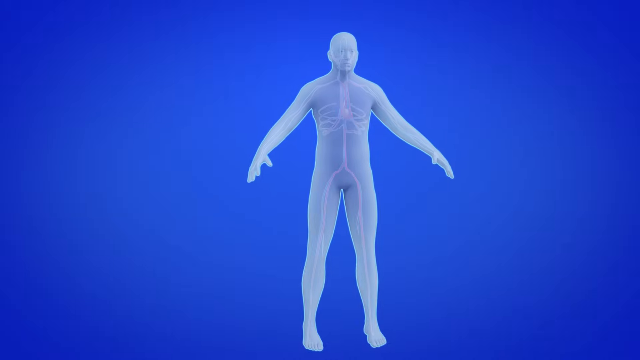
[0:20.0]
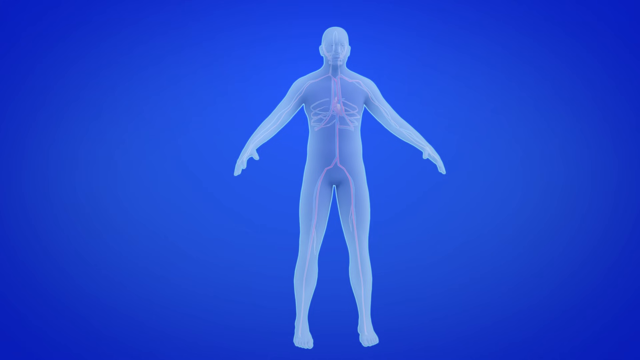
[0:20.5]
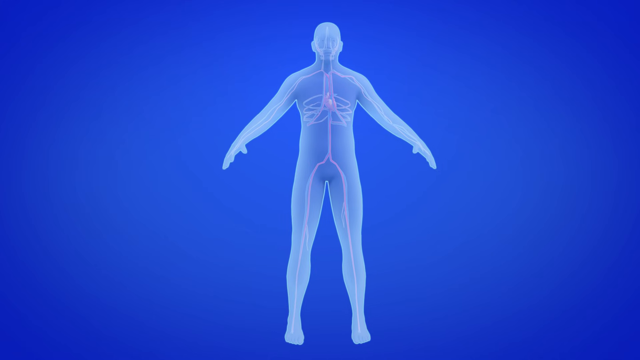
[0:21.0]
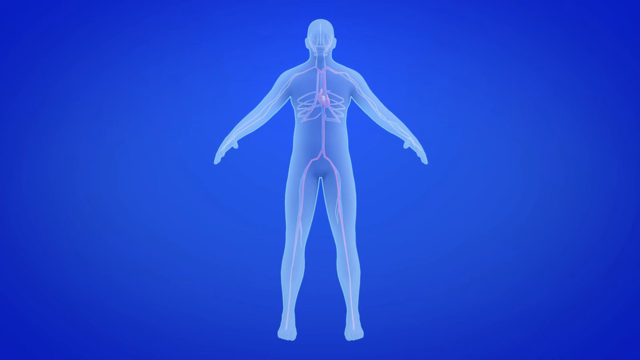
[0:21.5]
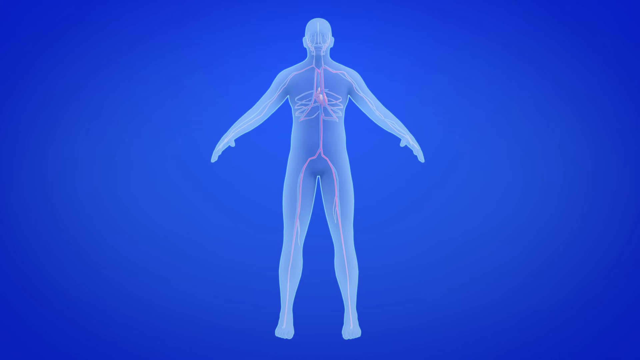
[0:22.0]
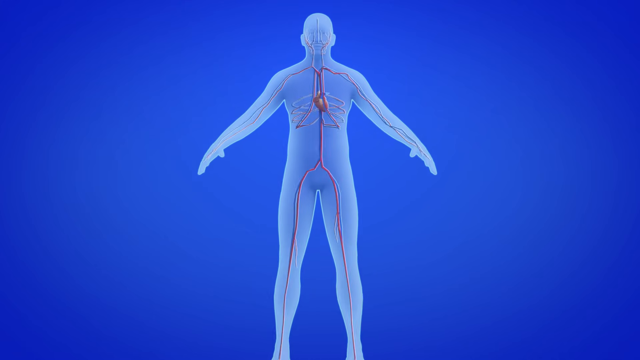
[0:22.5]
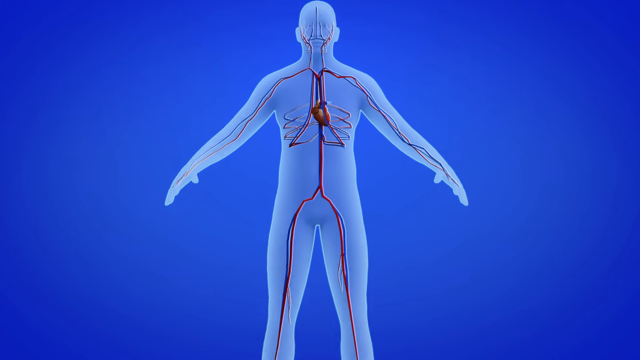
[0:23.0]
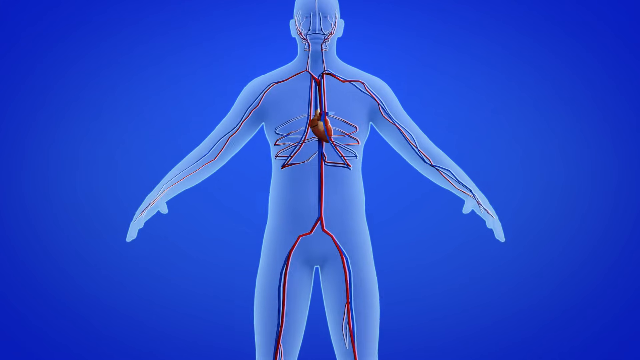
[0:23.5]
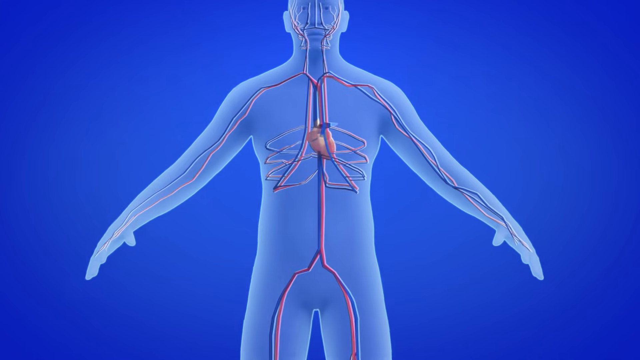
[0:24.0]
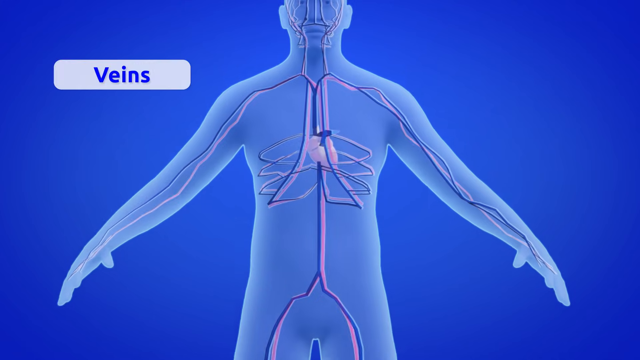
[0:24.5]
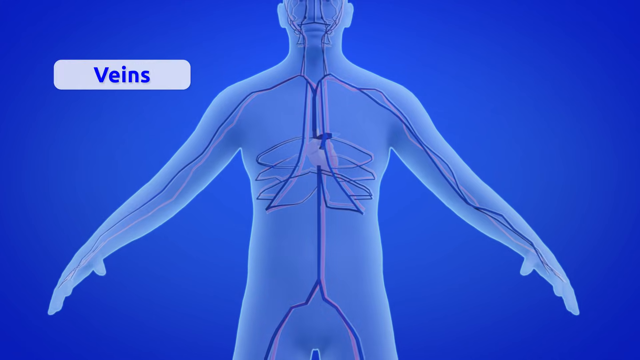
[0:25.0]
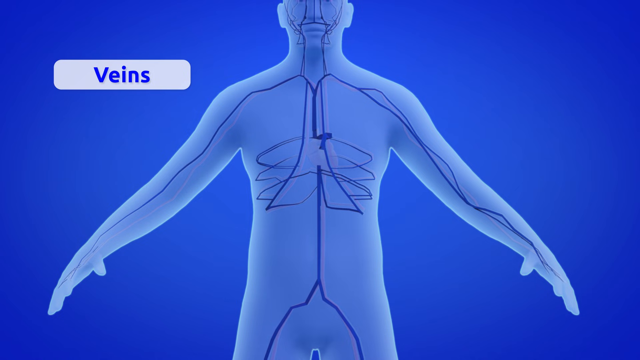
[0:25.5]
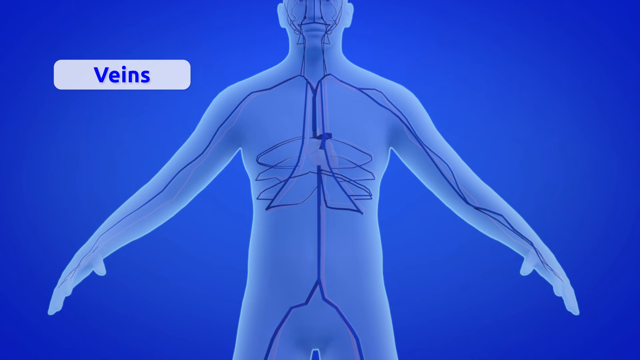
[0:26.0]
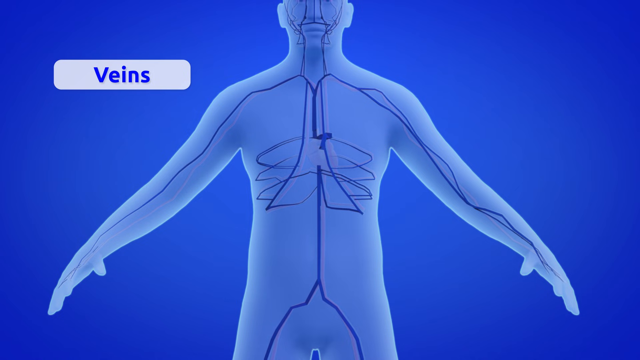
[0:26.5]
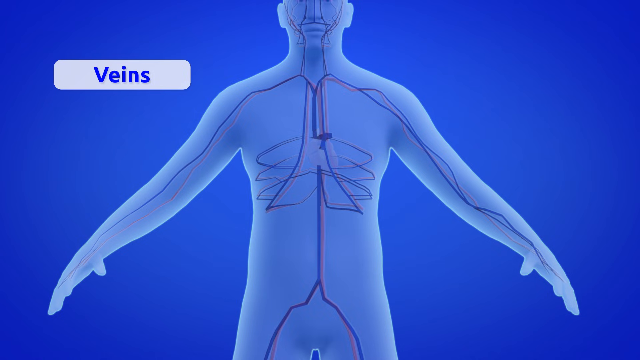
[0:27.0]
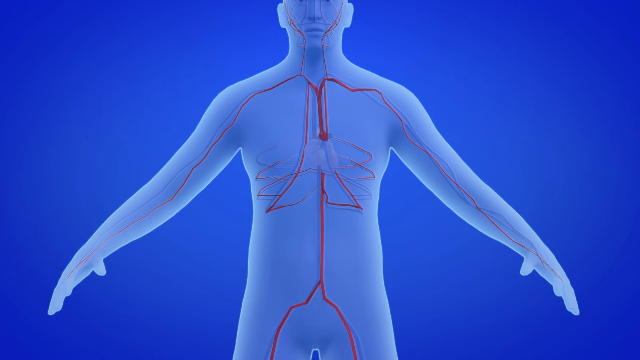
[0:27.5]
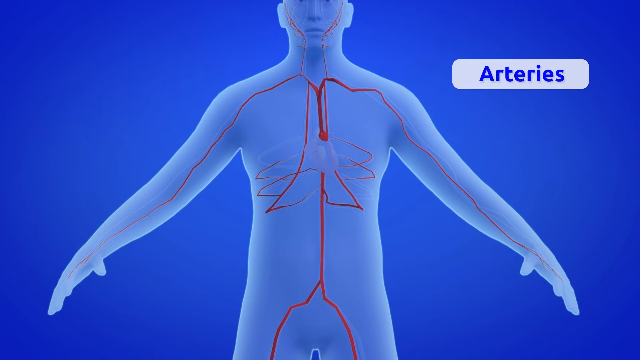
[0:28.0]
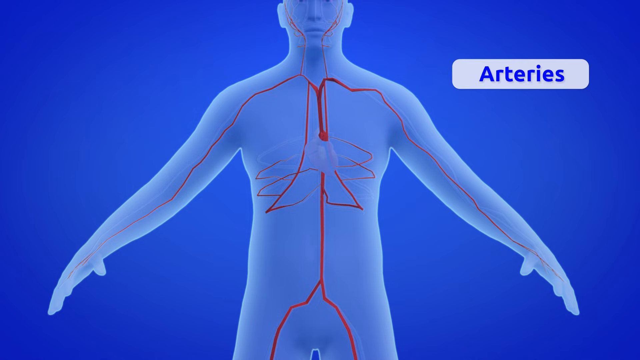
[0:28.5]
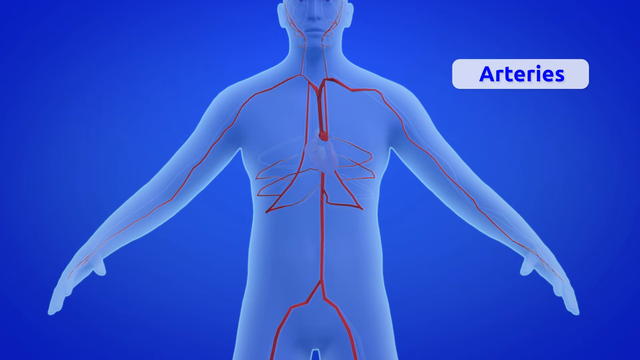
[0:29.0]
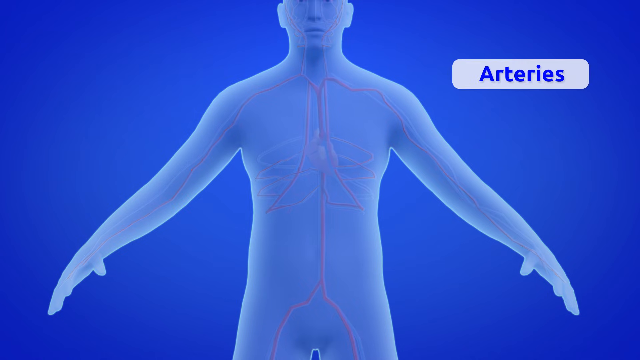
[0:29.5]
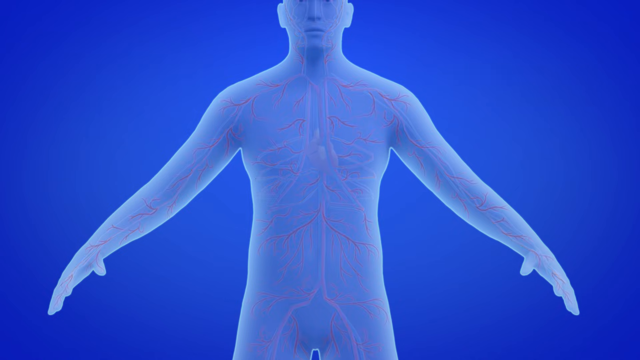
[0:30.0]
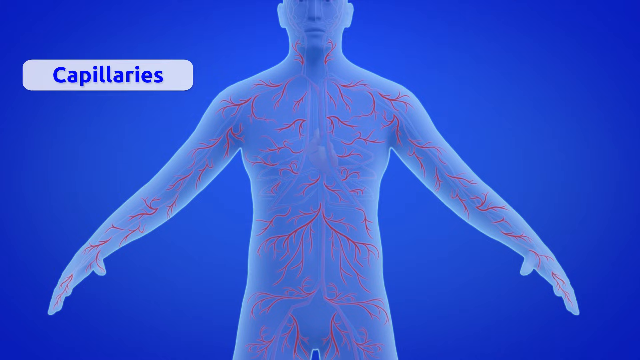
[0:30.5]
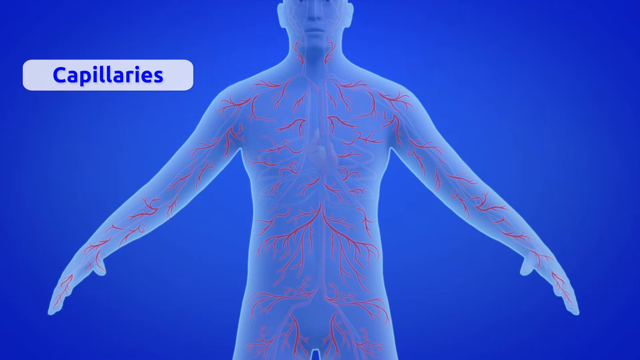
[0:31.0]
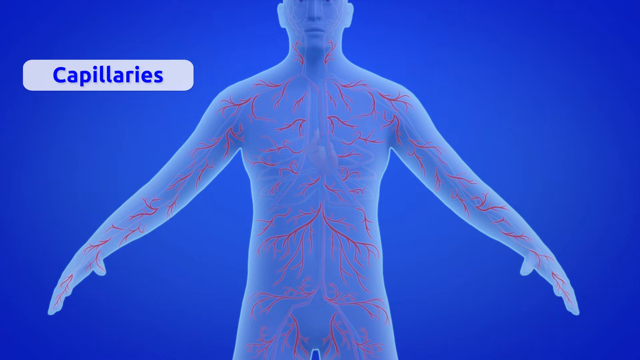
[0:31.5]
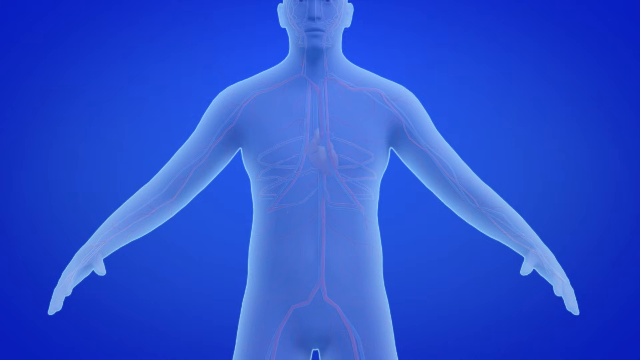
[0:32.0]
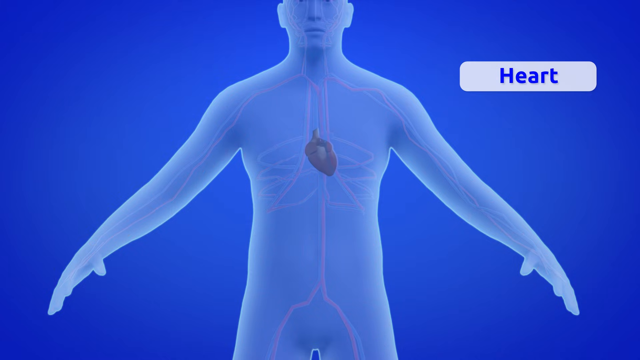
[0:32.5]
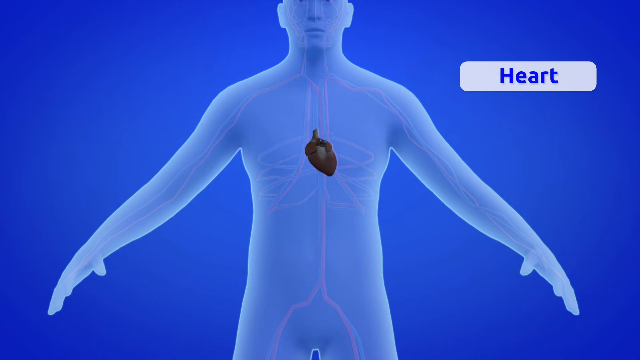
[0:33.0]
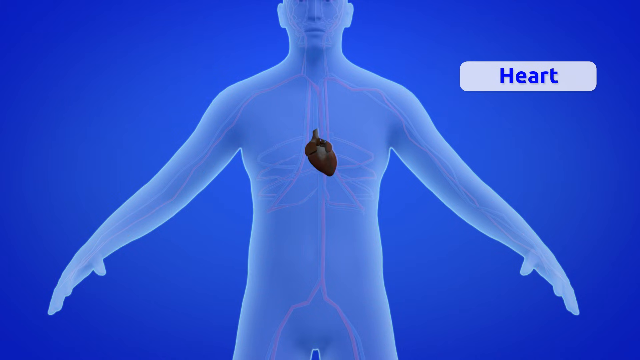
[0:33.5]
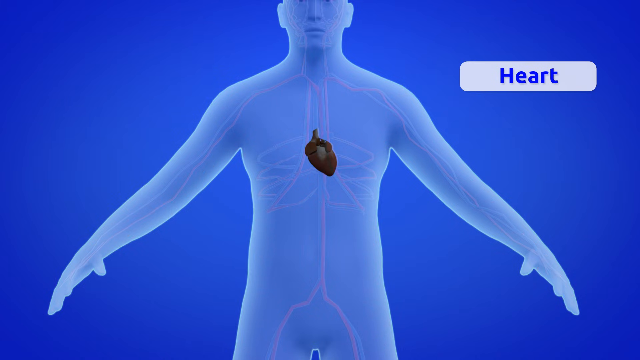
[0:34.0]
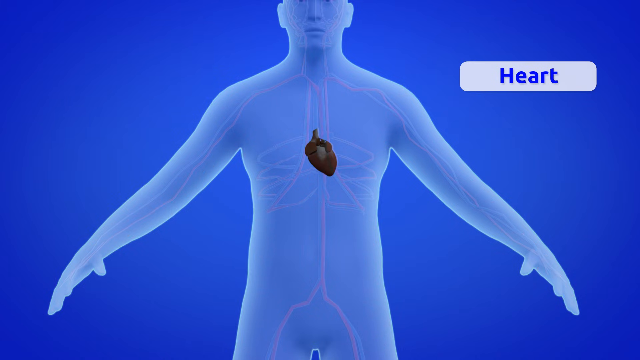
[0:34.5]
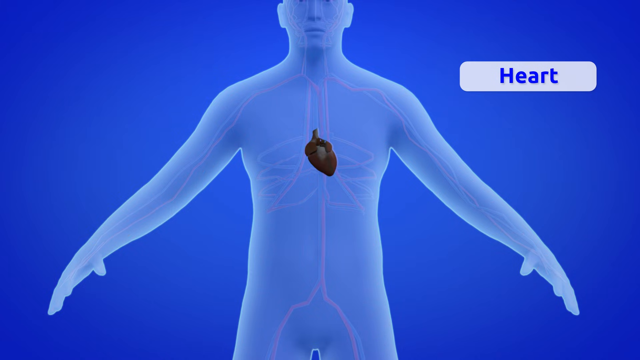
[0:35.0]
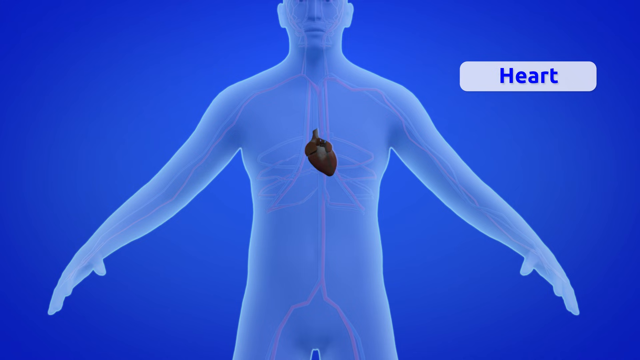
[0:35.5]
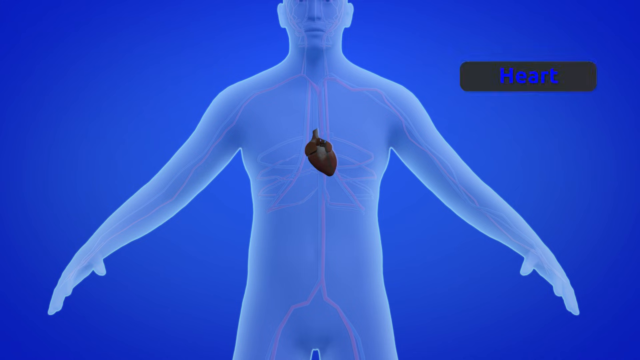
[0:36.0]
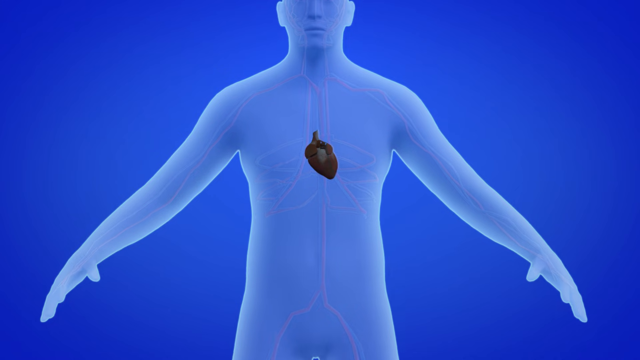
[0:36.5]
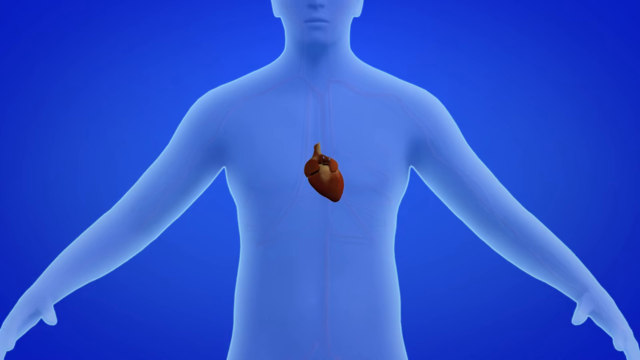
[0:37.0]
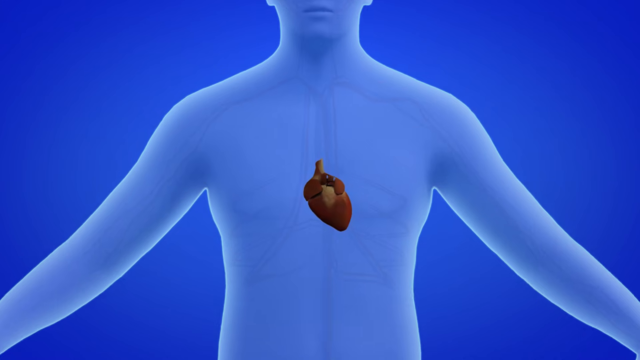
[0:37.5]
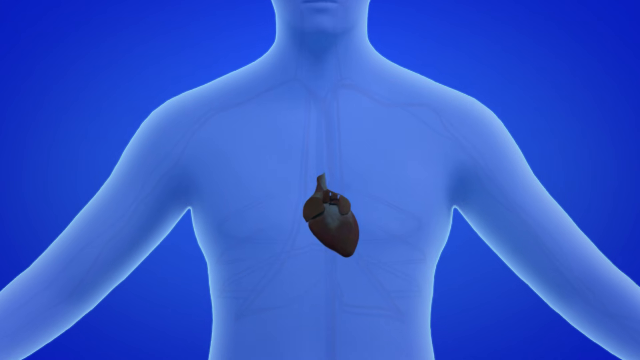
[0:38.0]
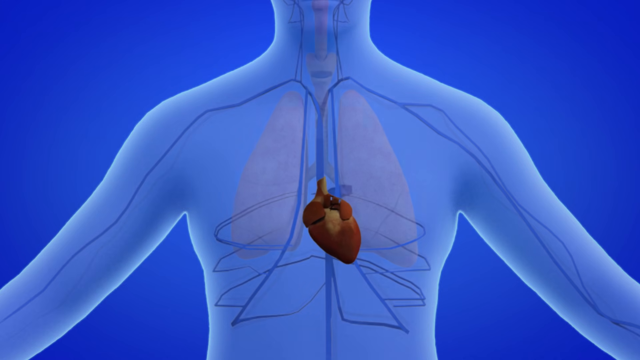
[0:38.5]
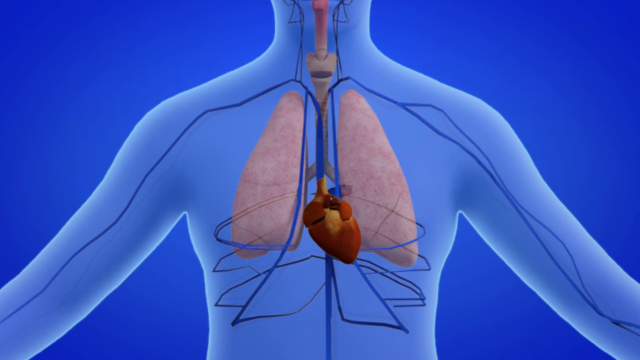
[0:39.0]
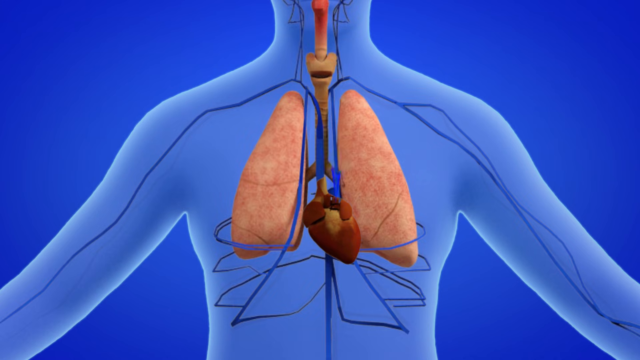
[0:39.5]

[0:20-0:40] The scan of the inside of the mannequin's body appears again, showing lines: blue lines are the veins and red lines are the arteries. These lines go into the heart. Shorter red and other lines are the capillaries. A big red heart then appears in the center of the human body, followed by more lines. The sequence is very dynamic, showing every part of the circulatory system.